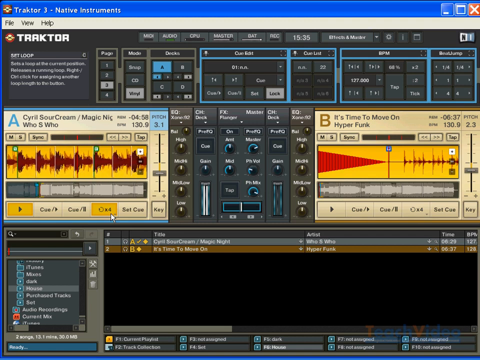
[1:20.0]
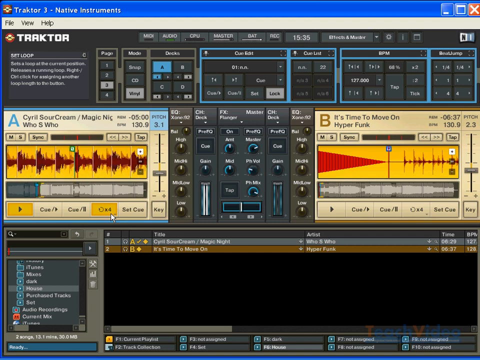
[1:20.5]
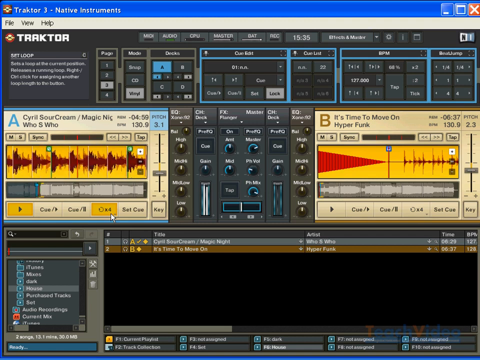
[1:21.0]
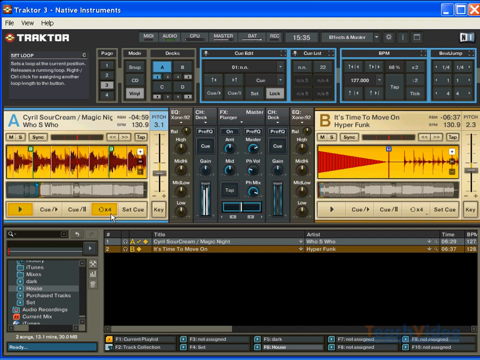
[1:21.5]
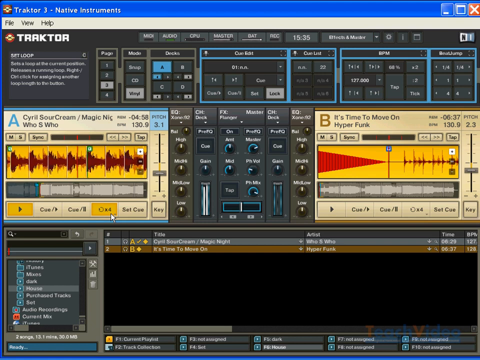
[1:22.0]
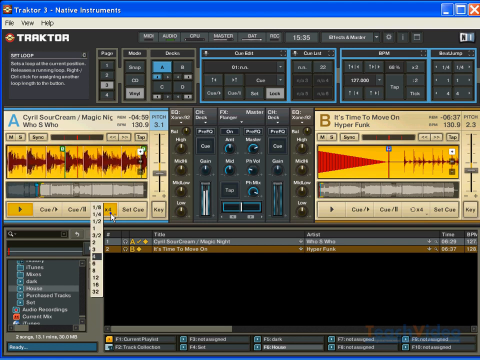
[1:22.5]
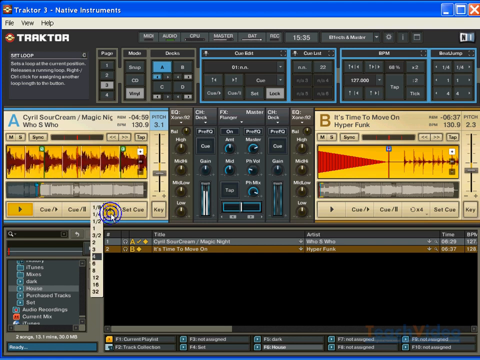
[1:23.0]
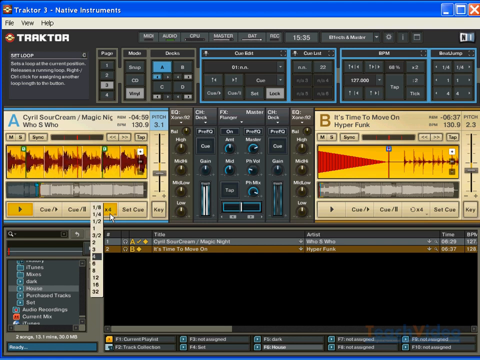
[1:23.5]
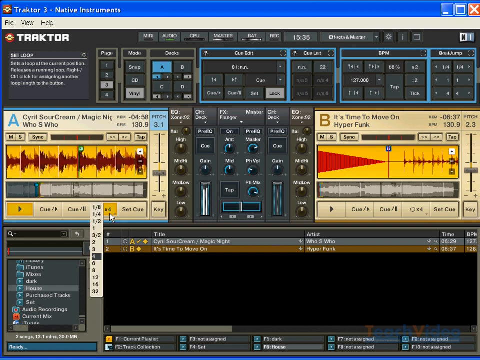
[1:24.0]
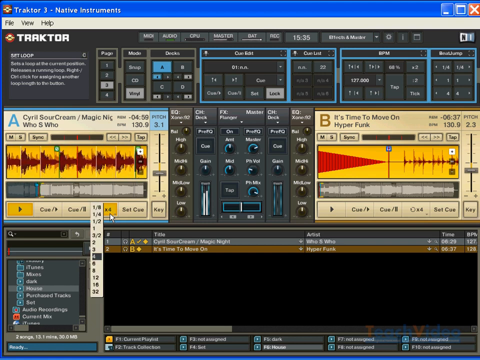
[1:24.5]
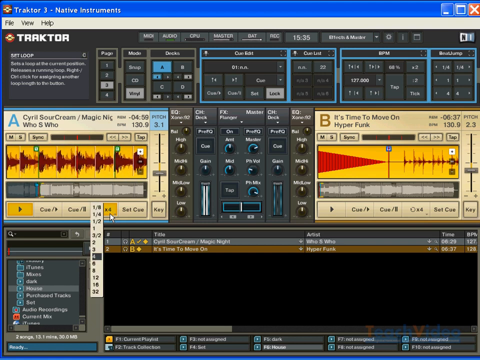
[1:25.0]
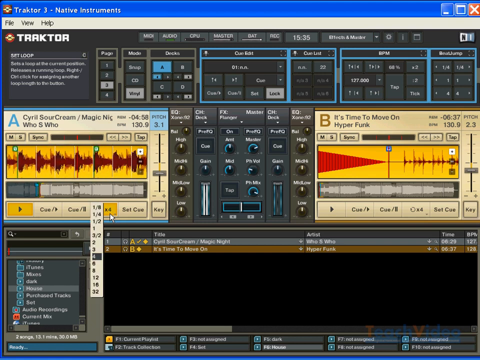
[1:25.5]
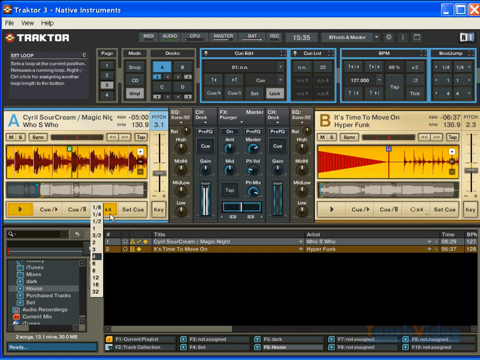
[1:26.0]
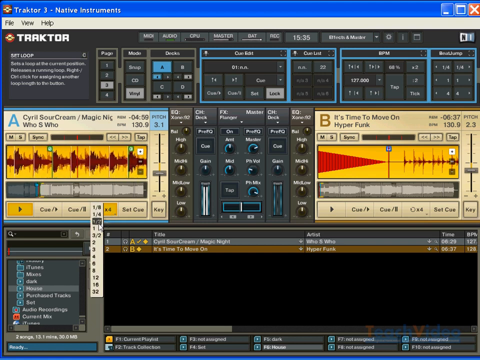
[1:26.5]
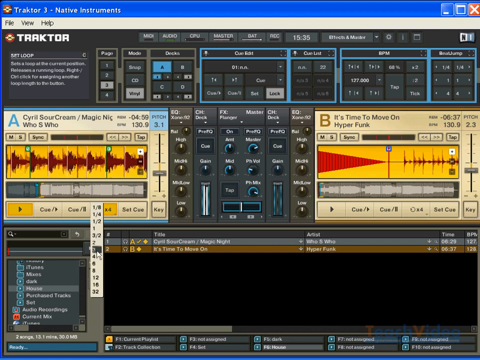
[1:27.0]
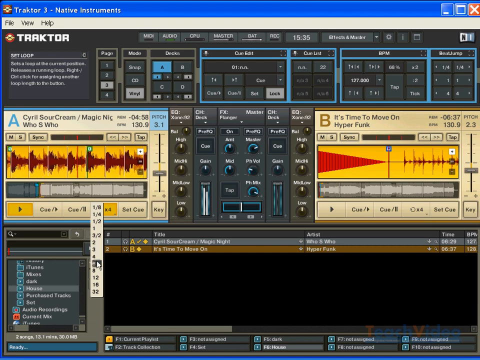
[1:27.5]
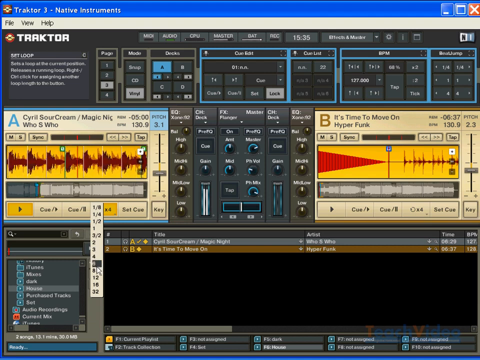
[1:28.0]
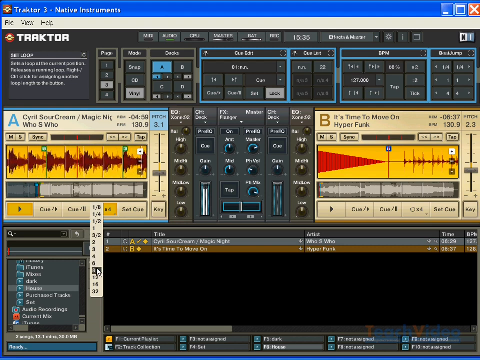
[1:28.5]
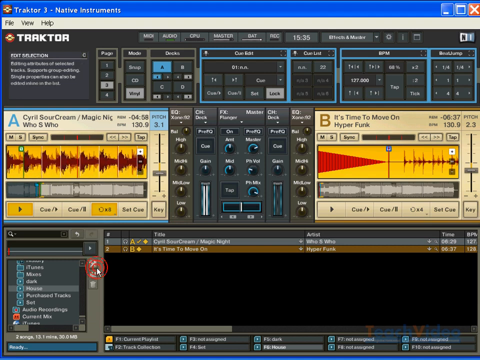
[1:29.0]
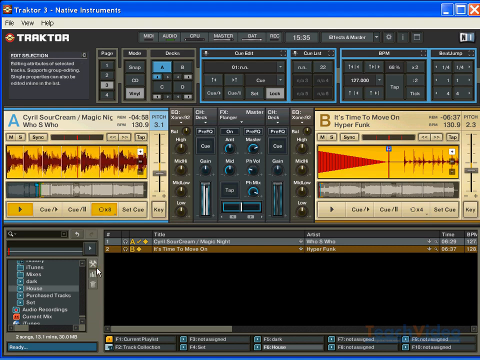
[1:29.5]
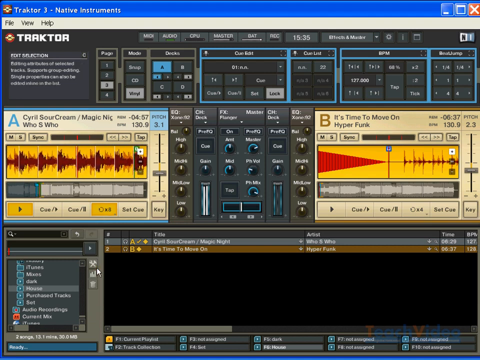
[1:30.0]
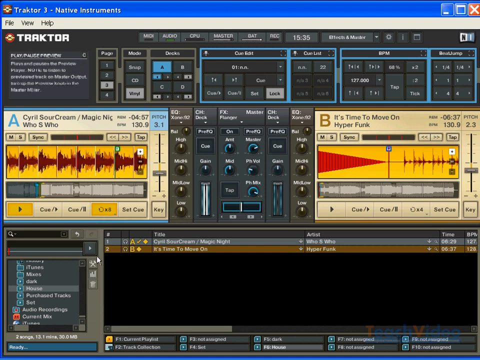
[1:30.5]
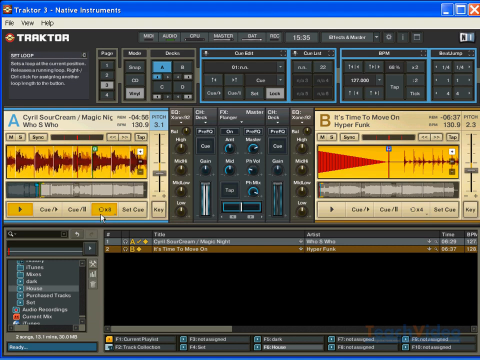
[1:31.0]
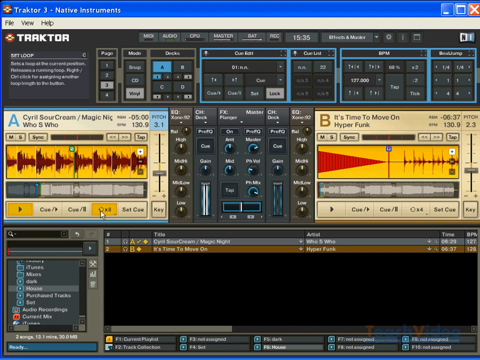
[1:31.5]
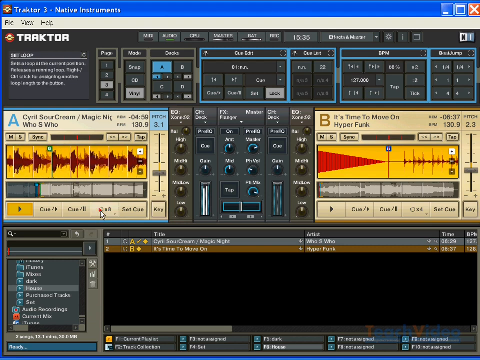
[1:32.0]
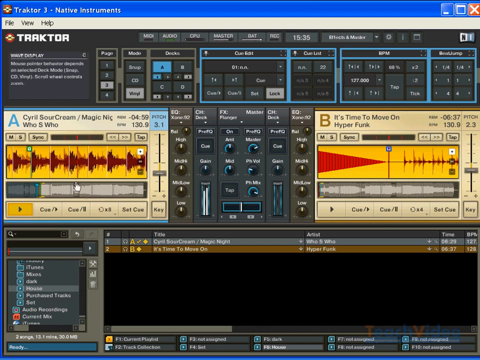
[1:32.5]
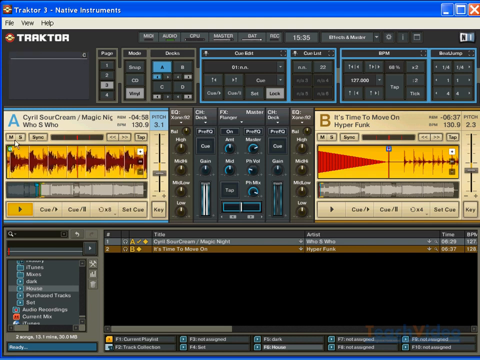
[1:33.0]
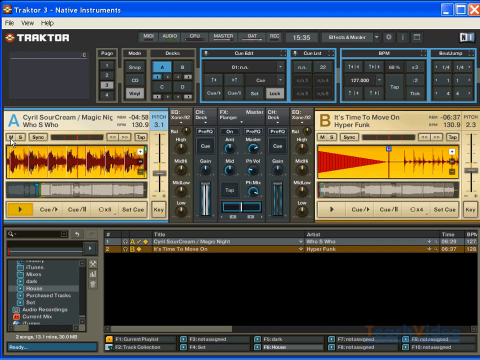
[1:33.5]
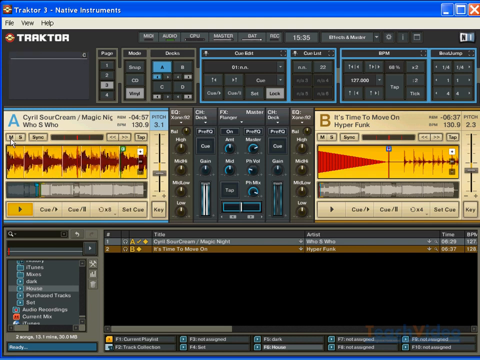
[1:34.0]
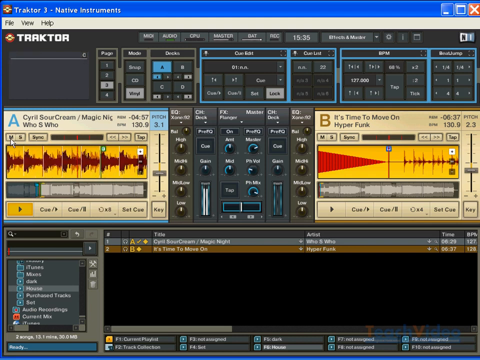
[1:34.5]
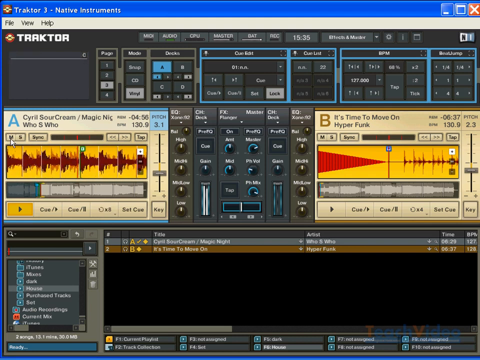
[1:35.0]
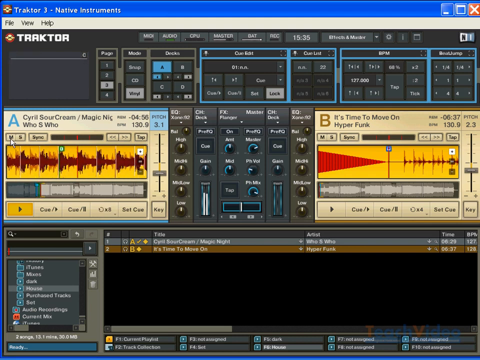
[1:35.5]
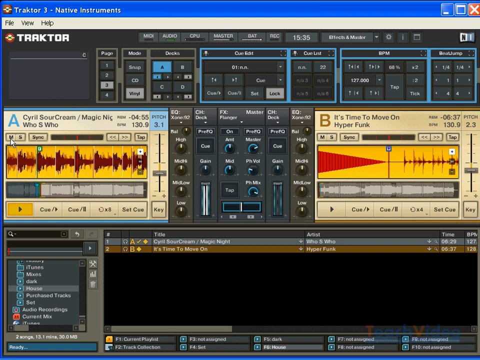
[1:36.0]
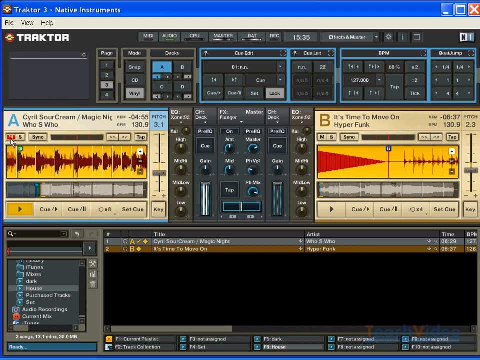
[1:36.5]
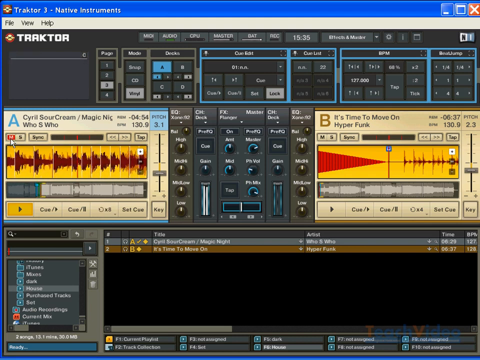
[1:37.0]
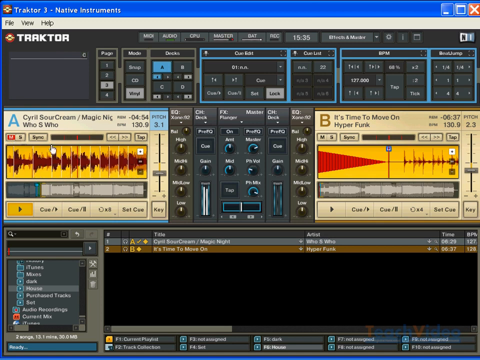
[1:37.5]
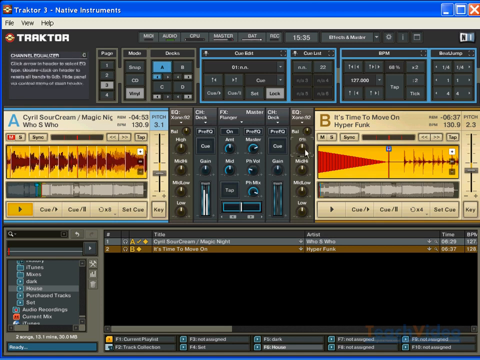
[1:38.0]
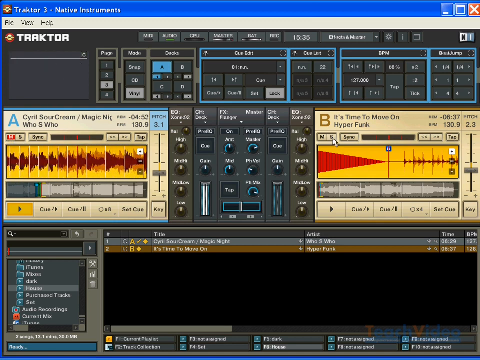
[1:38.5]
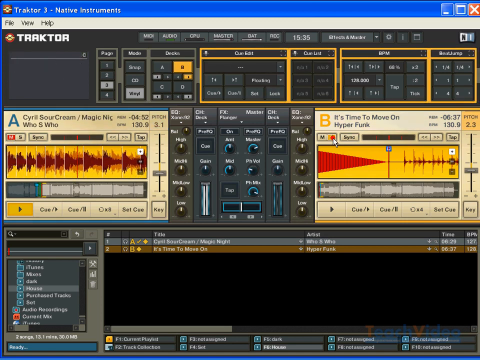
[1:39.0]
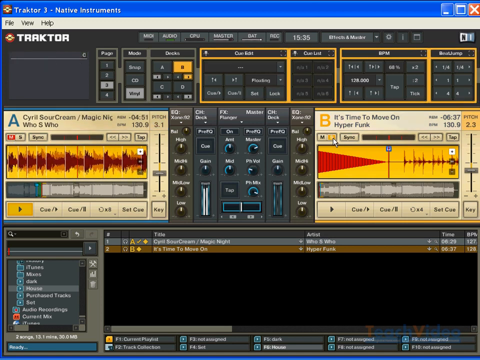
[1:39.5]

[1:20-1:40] The mouse hovers over the x4 button with the rotation image for a few seconds before a dropdown finally appears over it. The options, from the top, are 1/8, 1/4, 1/2, 1, 3/2, 2, 3, 4, 6, 8, 12, 16 and 32, with 4 currently selected. The text is in a black font on a white box, and the selected 4 has a blackish-gray highlight with white text. The mouse selects x8, then unclicks the x8 button so it is no longer highlighted in yellow. The mouse goes to the top left of the left faded yellow box and clicks a little M button right above the yellow rectangle with the red sound waves, several times; it turns red. It then moves to the faded yellow box on the right side of the screen, which has the same buttons; both boxes have an M button and an S button right beside each other, with the S to the left of the M. The mouse clicks the S button and it turns yellow. The boxes in the top row, from about the middle to the right side, have a blue stroke around them, and as soon as the S button is pressed the stroke turns yellow.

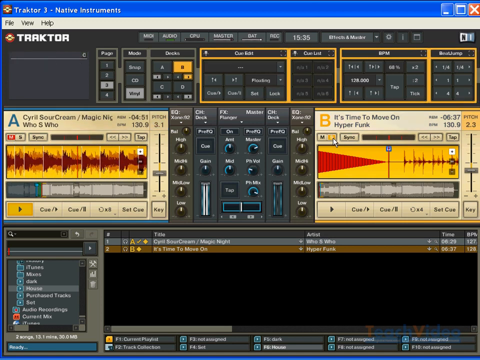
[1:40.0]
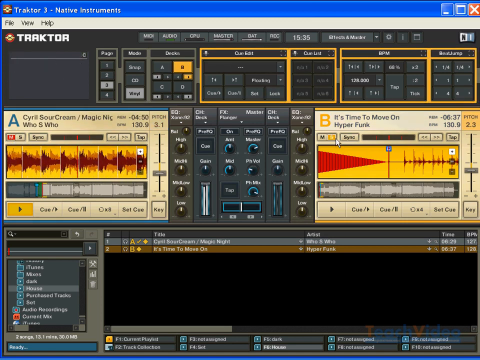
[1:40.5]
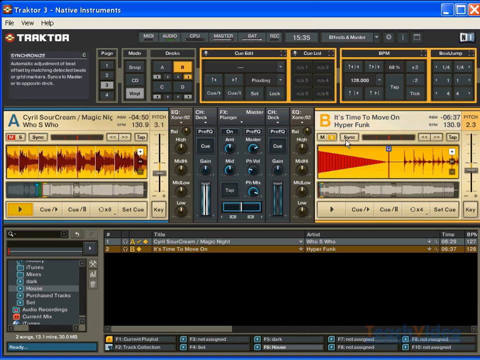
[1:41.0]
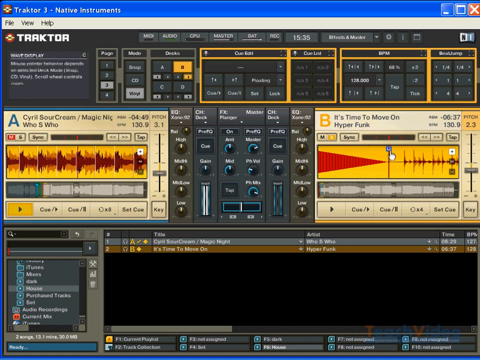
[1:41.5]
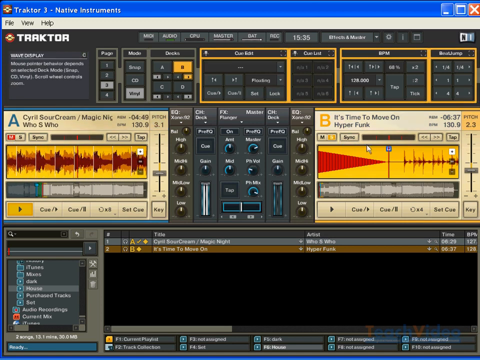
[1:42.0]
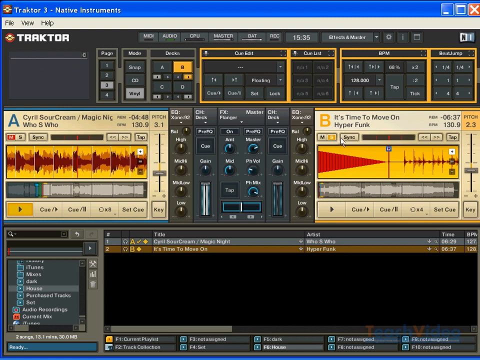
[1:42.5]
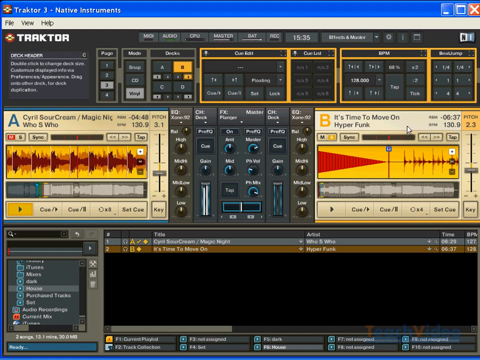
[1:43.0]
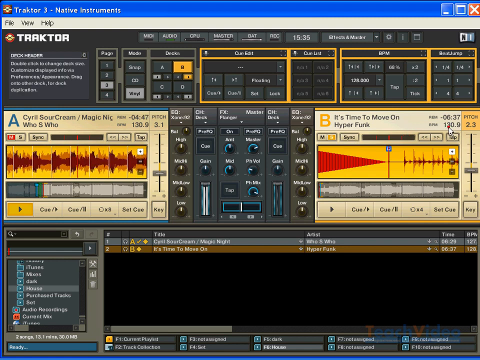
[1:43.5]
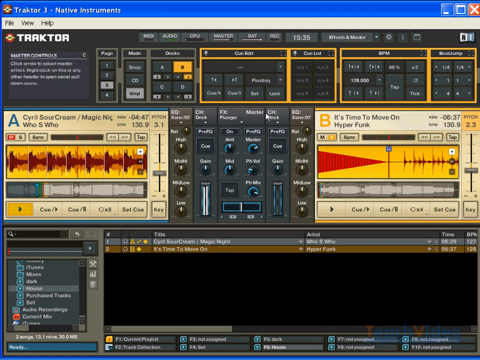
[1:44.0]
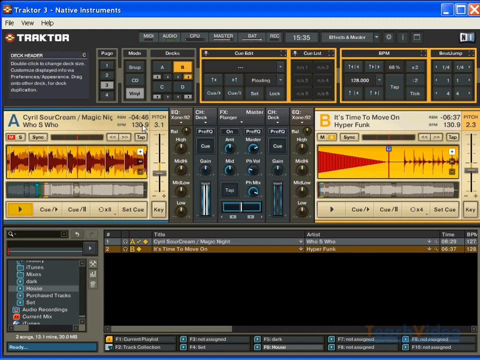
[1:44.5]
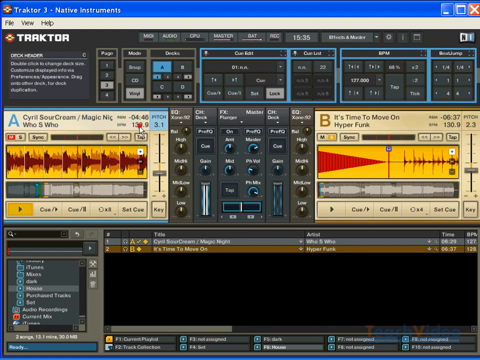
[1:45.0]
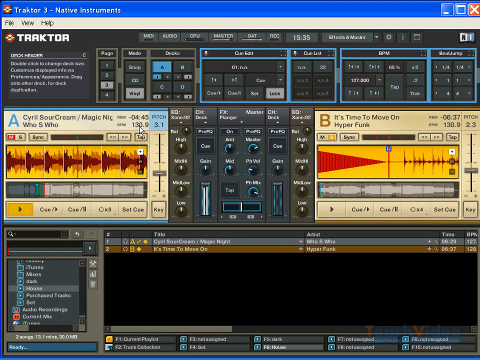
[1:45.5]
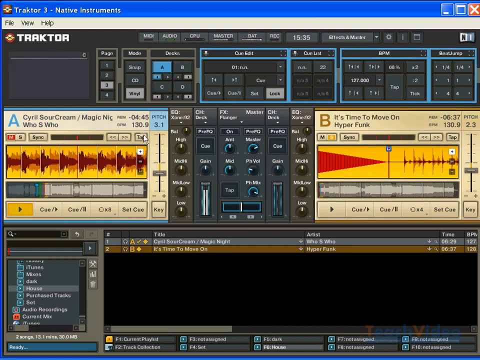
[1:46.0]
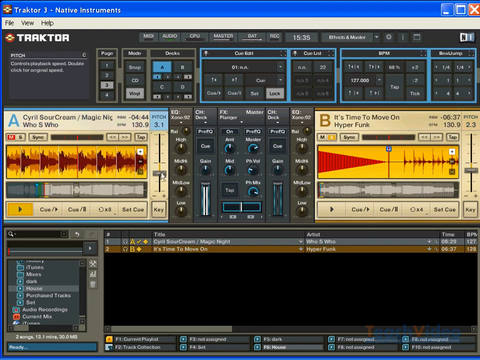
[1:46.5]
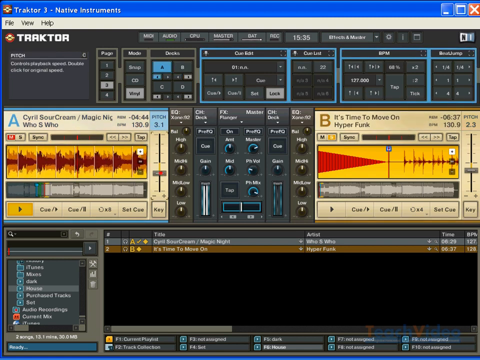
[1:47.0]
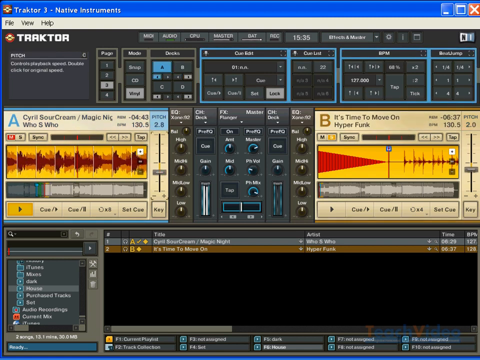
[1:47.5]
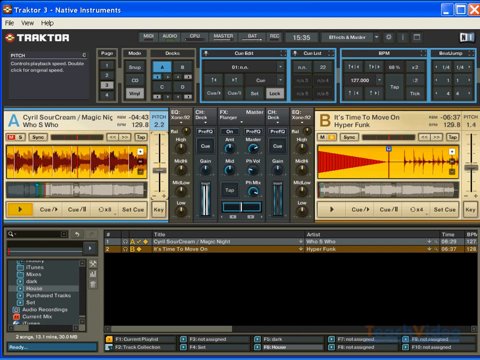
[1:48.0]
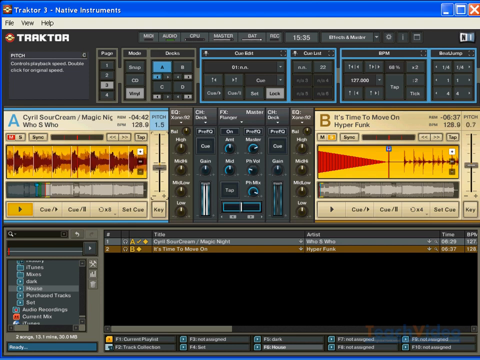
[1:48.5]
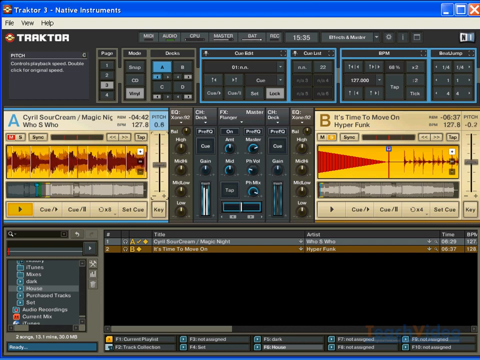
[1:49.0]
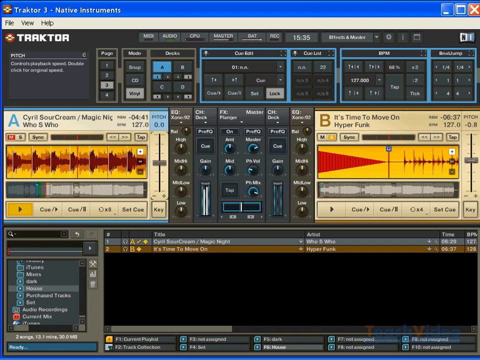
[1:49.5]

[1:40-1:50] In the same audio program, the mouse goes to the top right of the faded yellow box in the middle of the screen and clicks around that area, seemingly not on anything in particular. It then moves to the faded yellow box on the left side of the screen and clicks in roughly the same place. Each of these boxes has a little dial on its right side that can be pushed up or down, with "Pitch" above it and a number below that. The mouse grabs the dial of the left box and slowly moves it up from slightly below halfway to slightly above halfway; as it moves, the dials on both the left and right boxes move up, and the pitch number changes.